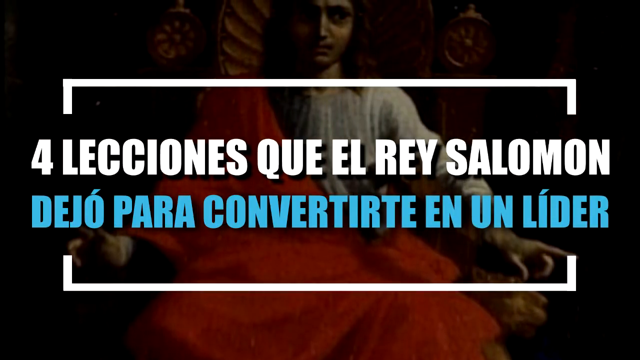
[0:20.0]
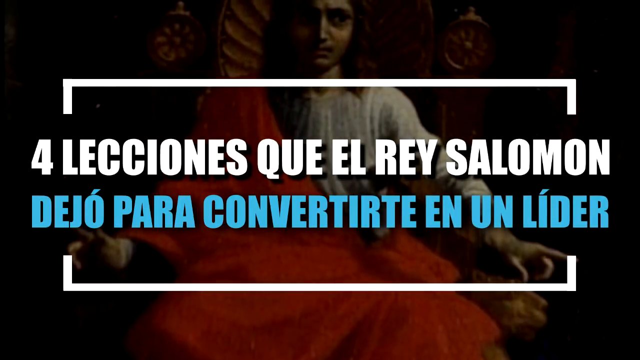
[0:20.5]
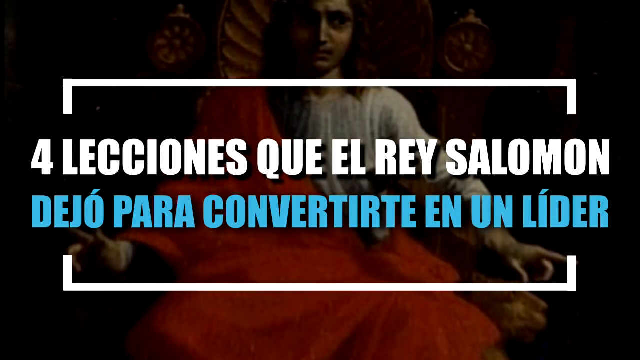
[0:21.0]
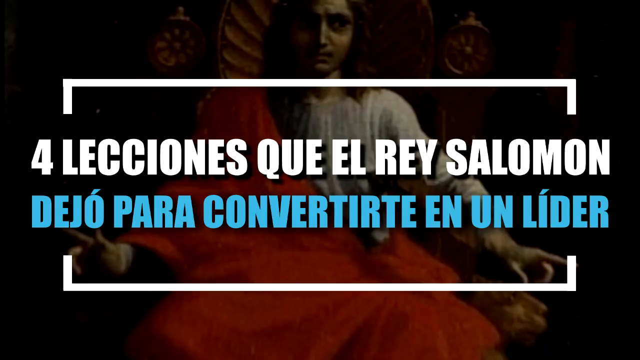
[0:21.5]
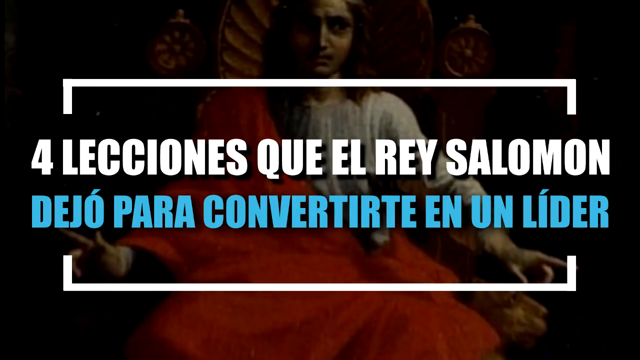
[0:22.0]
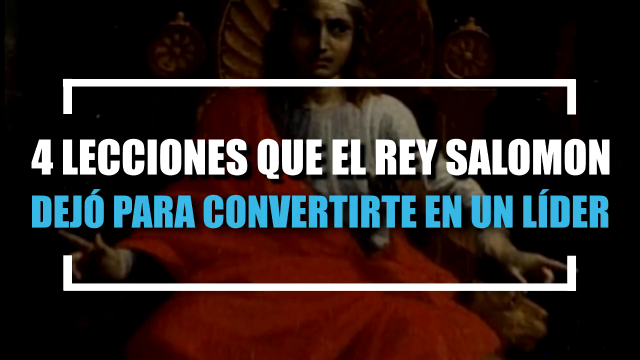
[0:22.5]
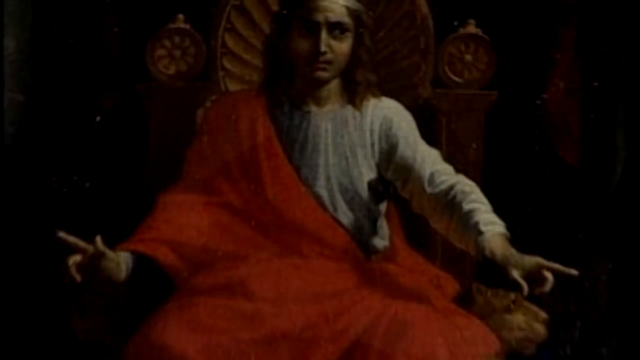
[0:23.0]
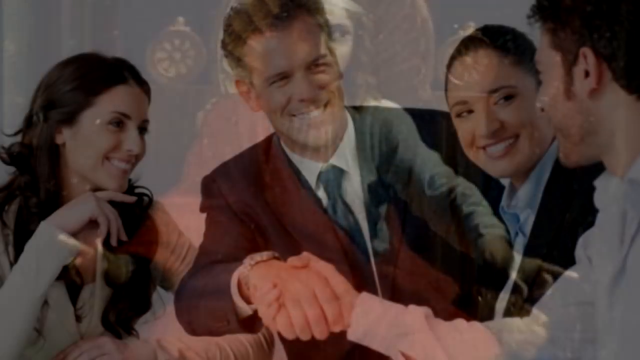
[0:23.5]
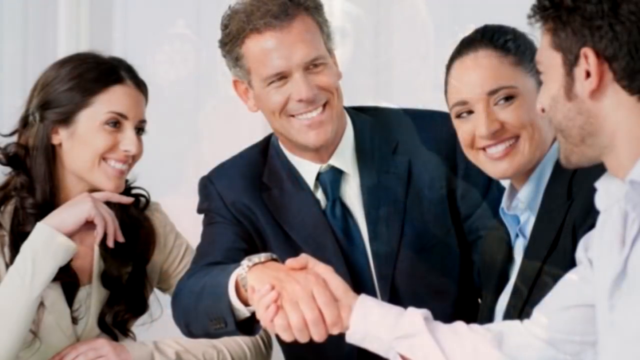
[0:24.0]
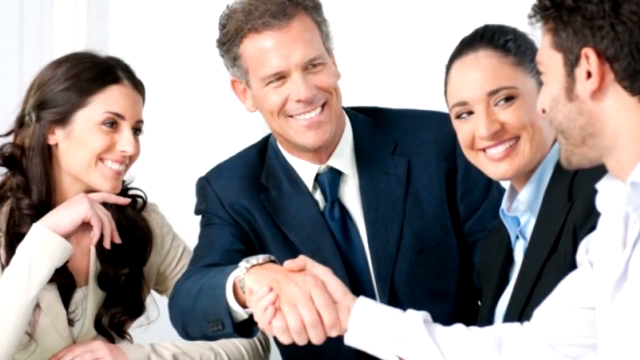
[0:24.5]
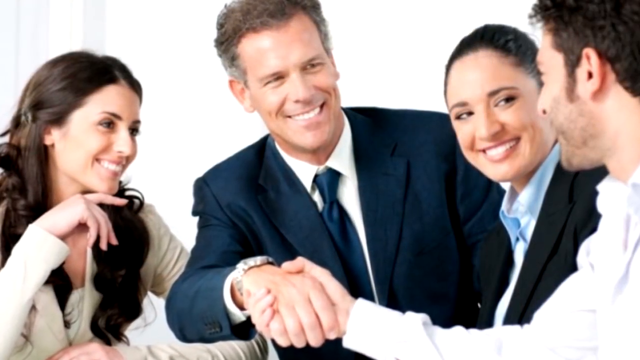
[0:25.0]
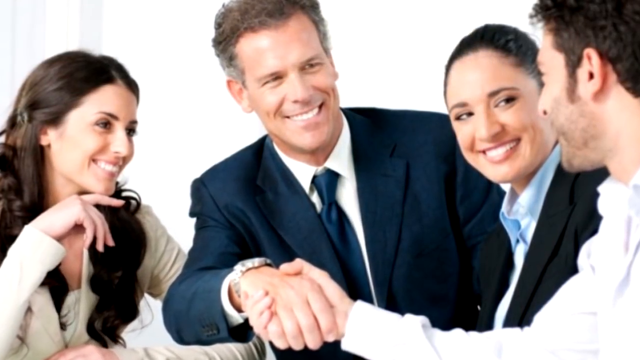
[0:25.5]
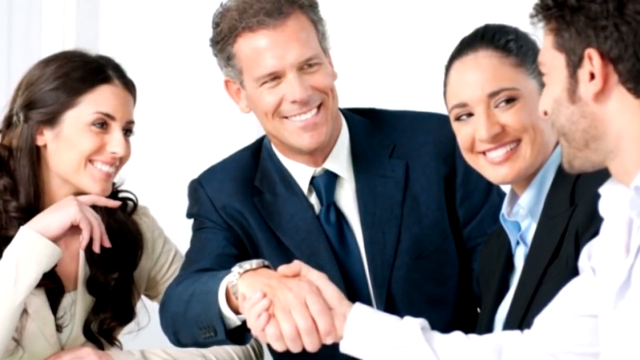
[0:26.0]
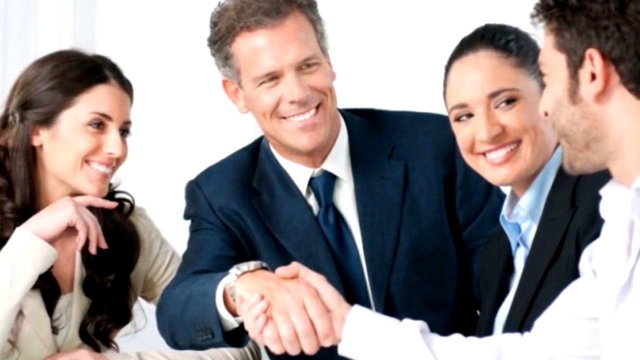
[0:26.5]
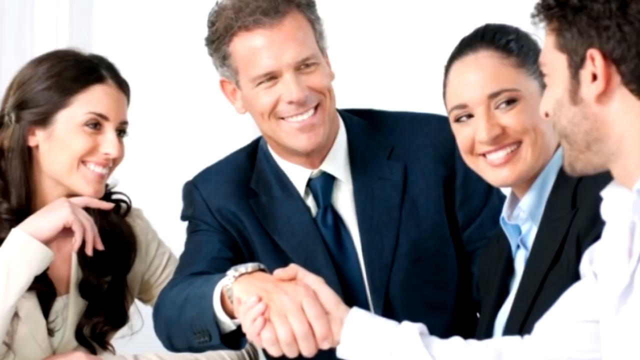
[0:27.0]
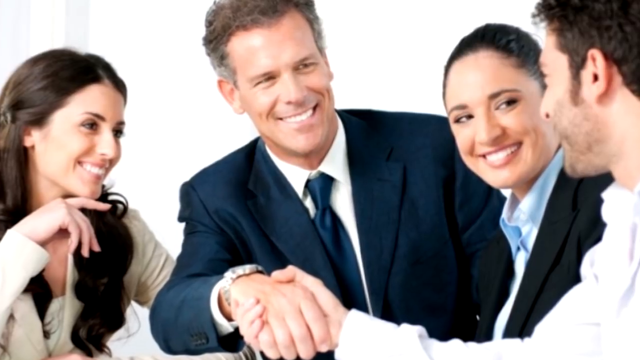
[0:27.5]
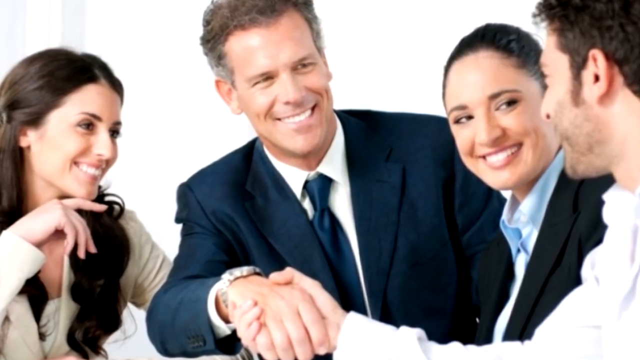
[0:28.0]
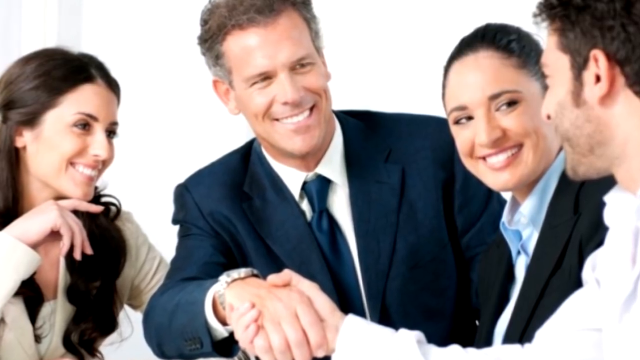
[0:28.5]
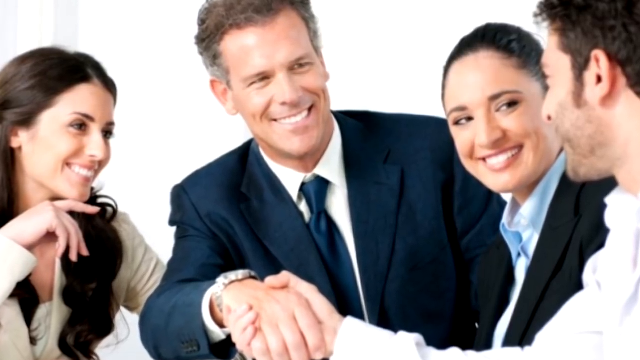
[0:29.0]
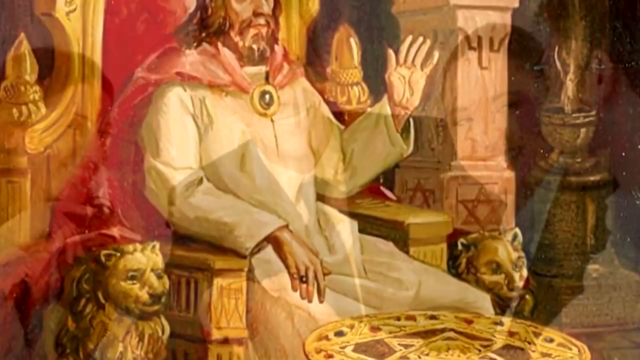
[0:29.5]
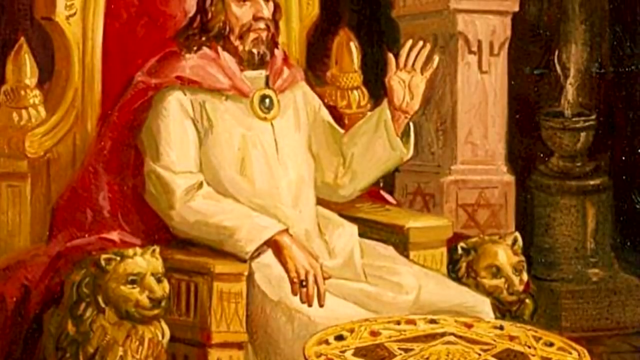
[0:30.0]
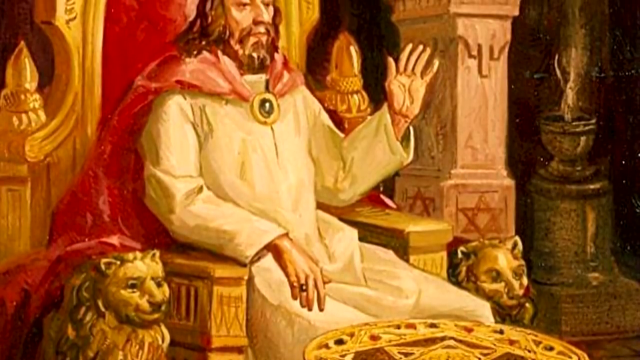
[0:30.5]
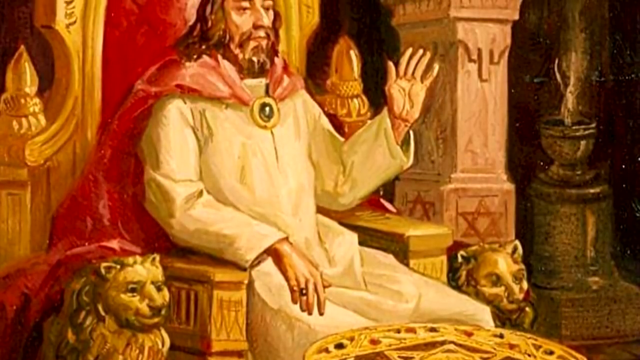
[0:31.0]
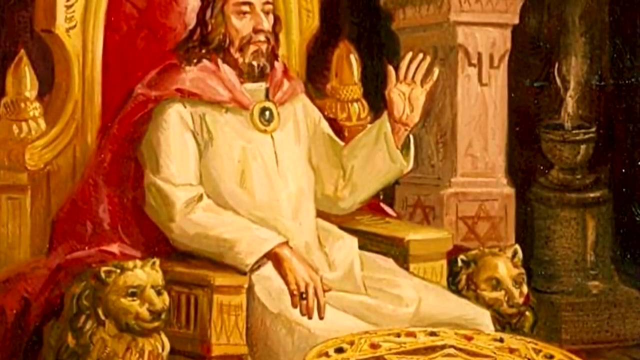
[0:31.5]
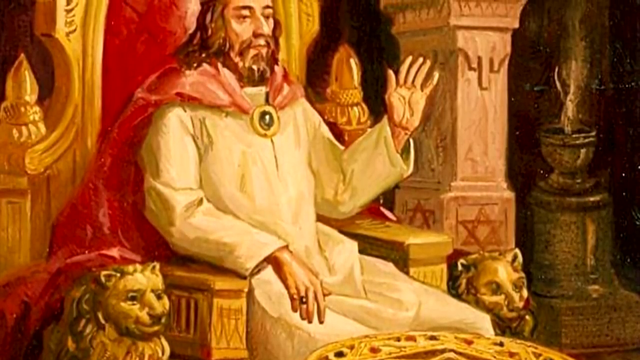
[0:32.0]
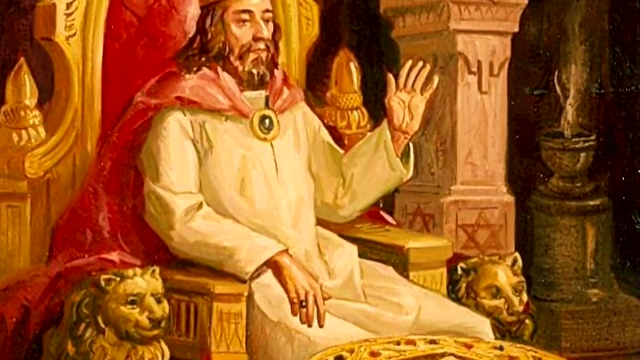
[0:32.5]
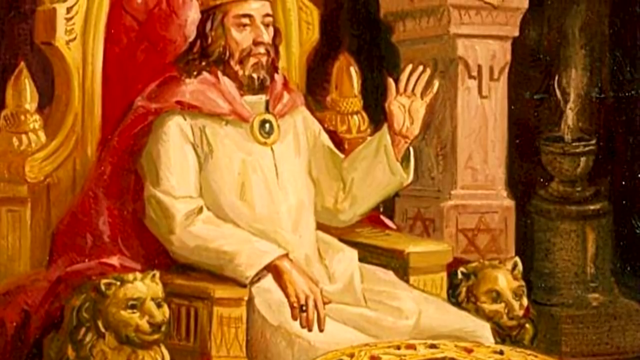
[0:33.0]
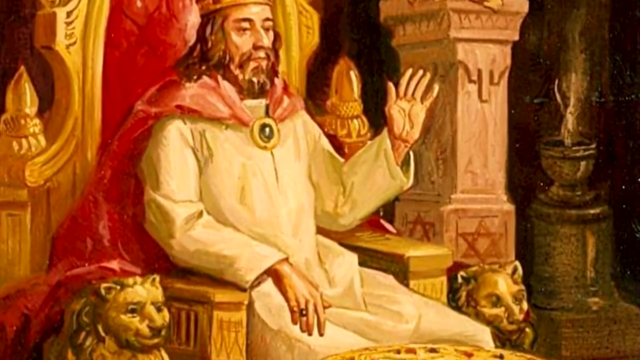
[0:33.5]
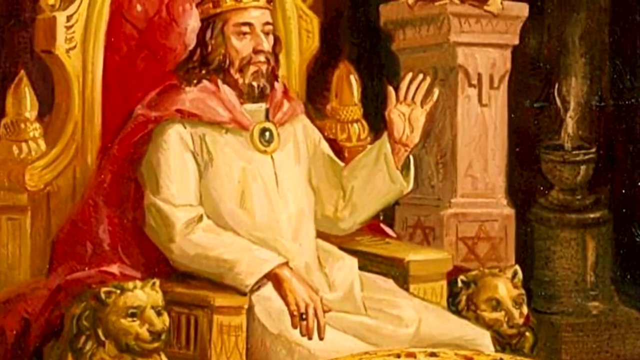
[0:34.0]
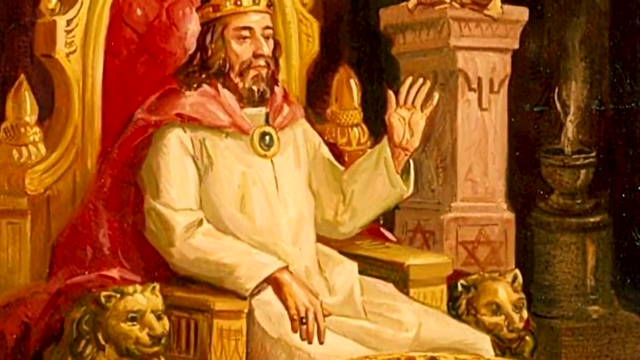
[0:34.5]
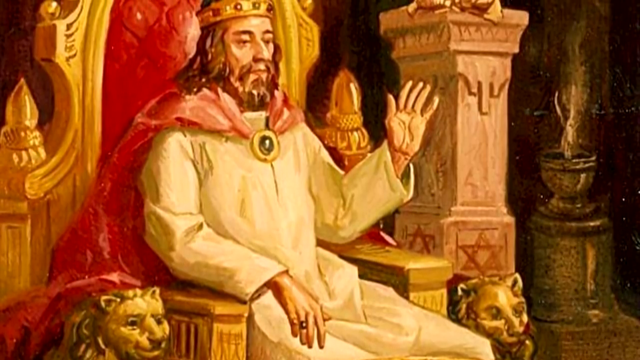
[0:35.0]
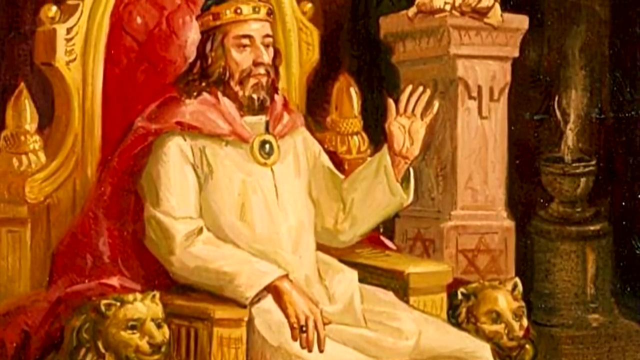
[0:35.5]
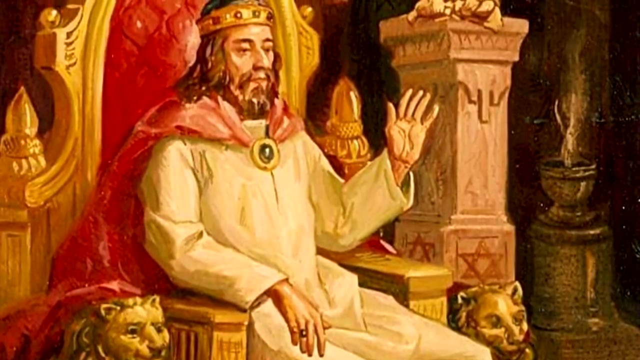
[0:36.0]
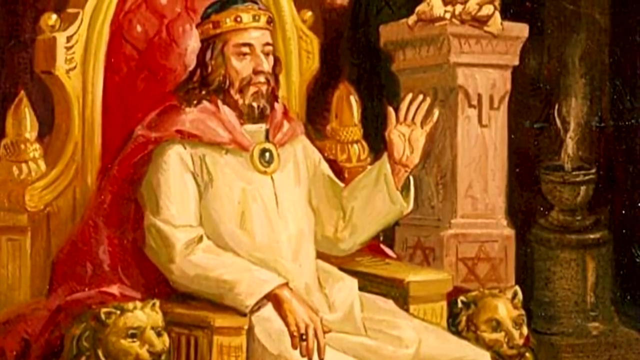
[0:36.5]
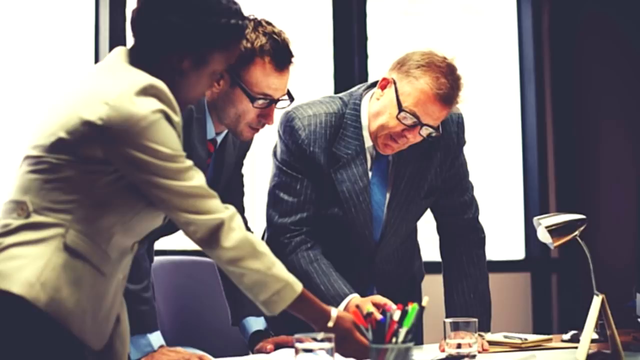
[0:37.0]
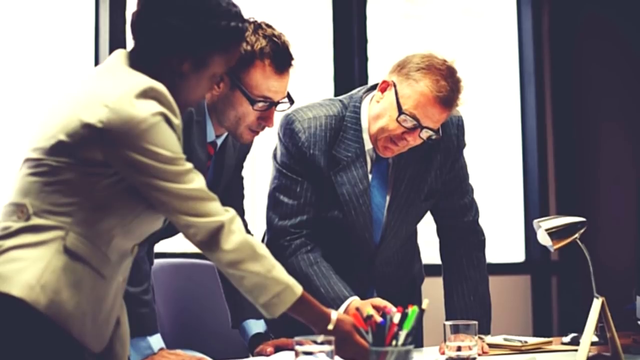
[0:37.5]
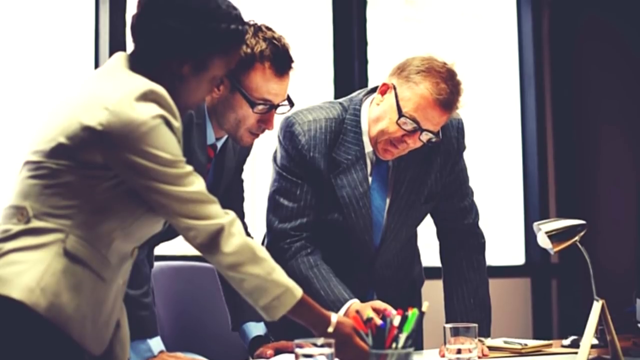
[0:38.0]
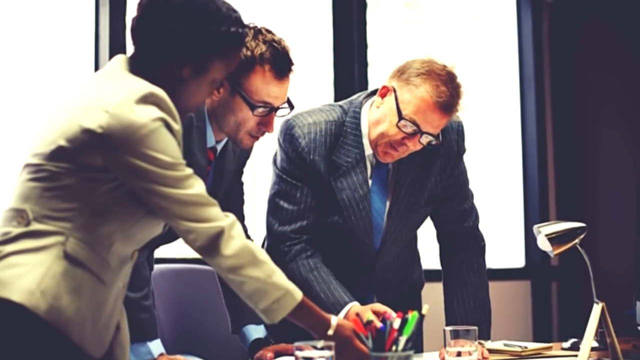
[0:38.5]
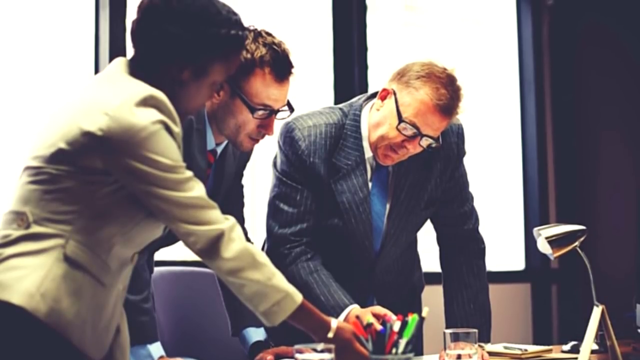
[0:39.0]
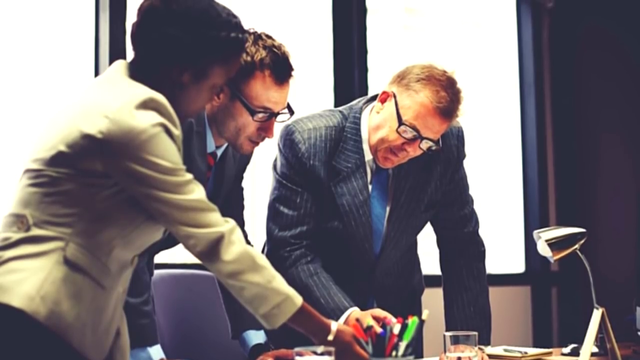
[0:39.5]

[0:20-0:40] The view is zoomed in on the painting of the man sitting on his throne, with non-English text on the screen, one line in white and one line in blue. The scene switches to something almost like a commercial: two men shake hands, all dressed professionally, with two women next to them, one beside each man. They are looking at the male and smiling, and everyone looks very happy. They all appear to be Caucasian, maybe with one of them Hispanic. The video then goes back to a painting of a man sitting on a very large throne with two tiger statues next to it. He has his hand up and wears a white gown with a cape that has a piece of jewelry connecting it.